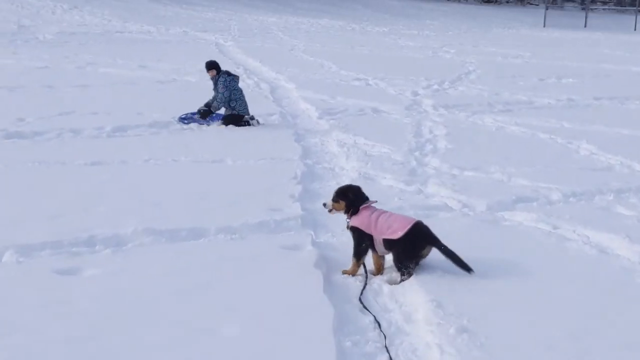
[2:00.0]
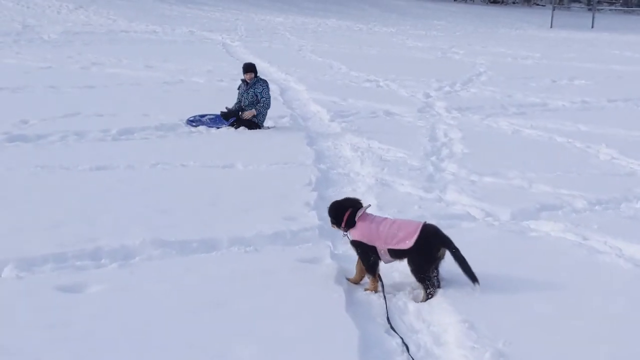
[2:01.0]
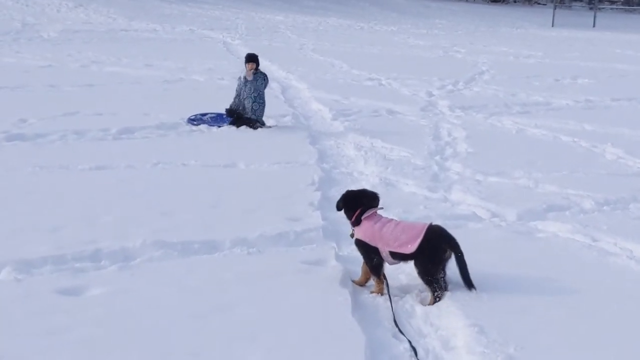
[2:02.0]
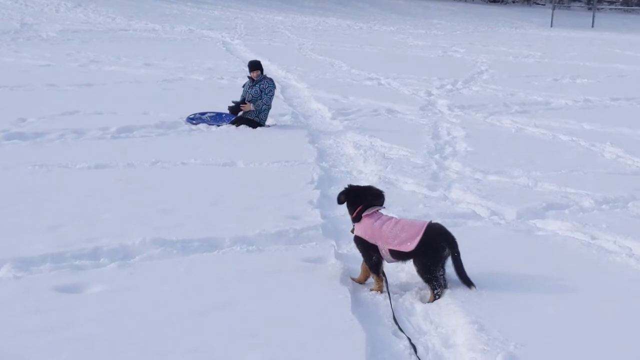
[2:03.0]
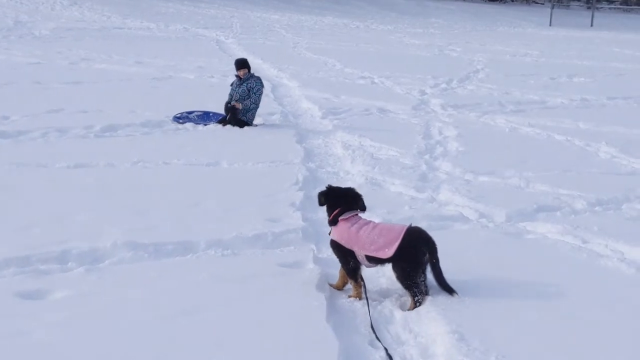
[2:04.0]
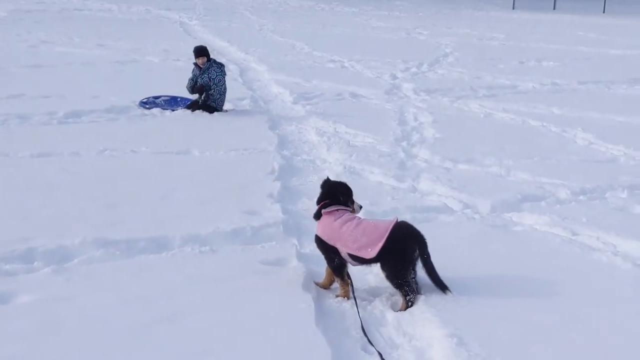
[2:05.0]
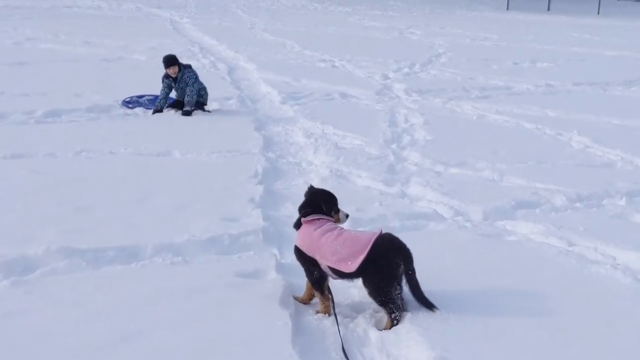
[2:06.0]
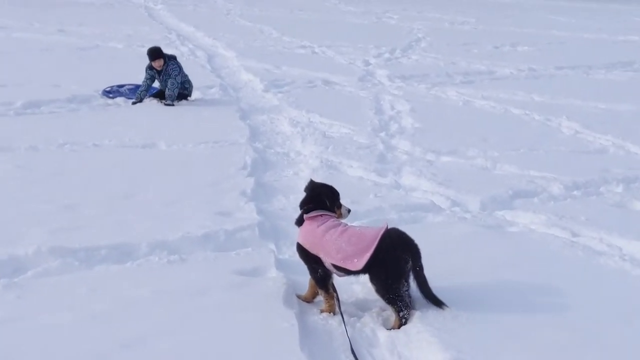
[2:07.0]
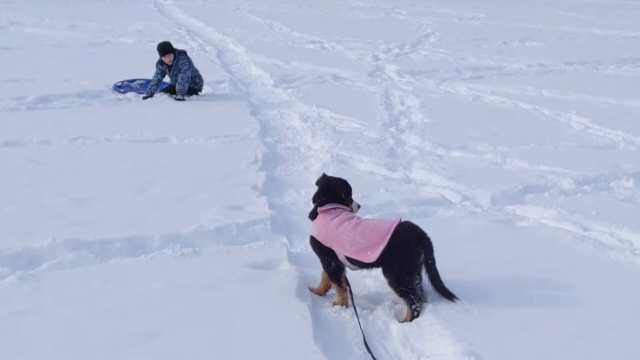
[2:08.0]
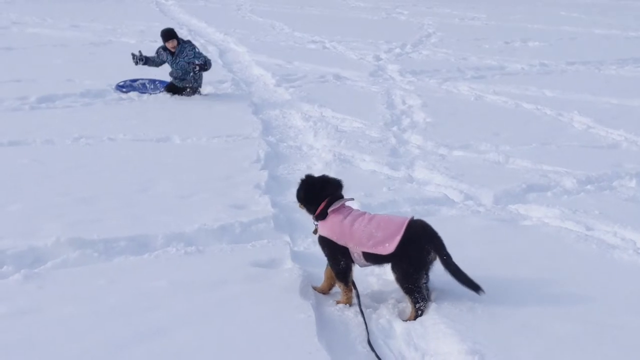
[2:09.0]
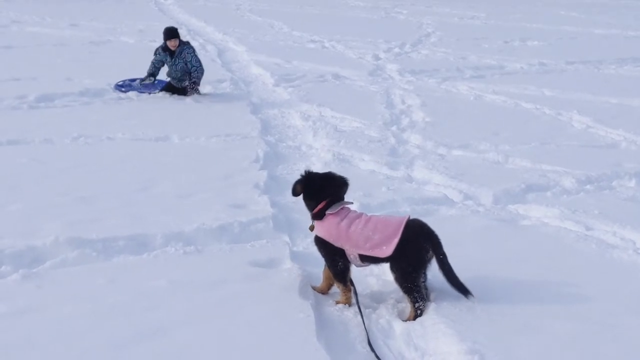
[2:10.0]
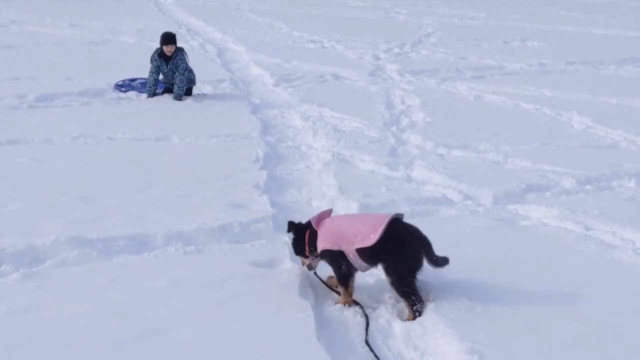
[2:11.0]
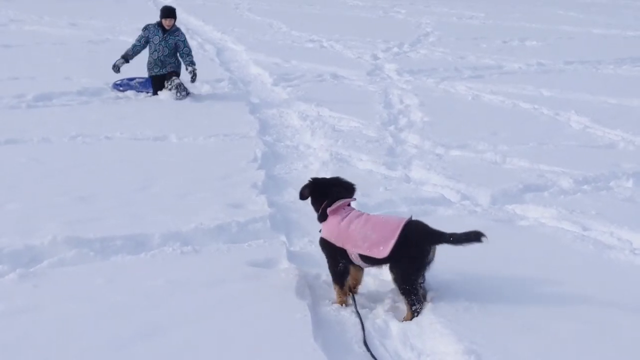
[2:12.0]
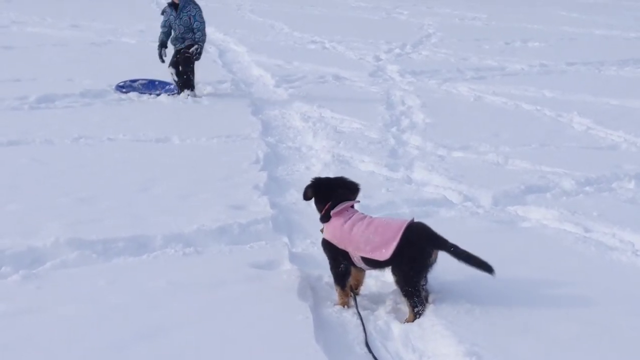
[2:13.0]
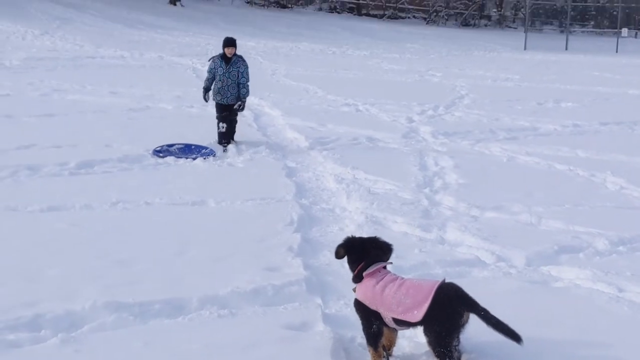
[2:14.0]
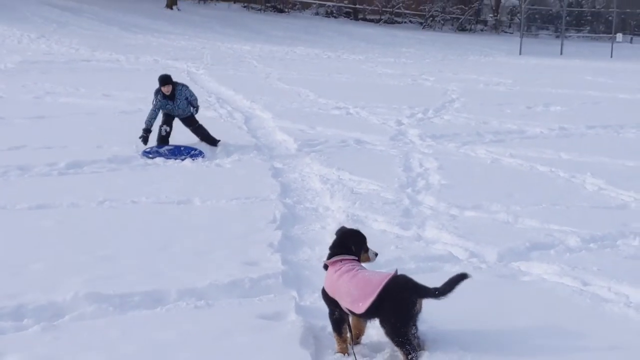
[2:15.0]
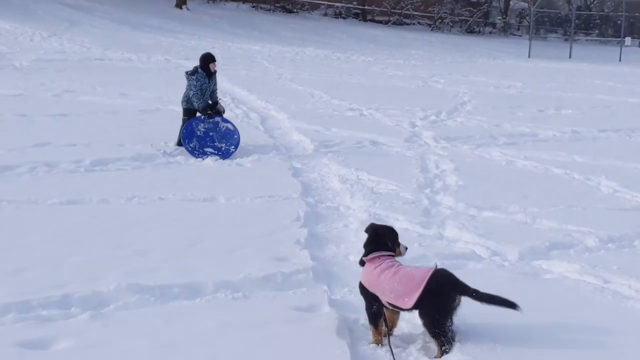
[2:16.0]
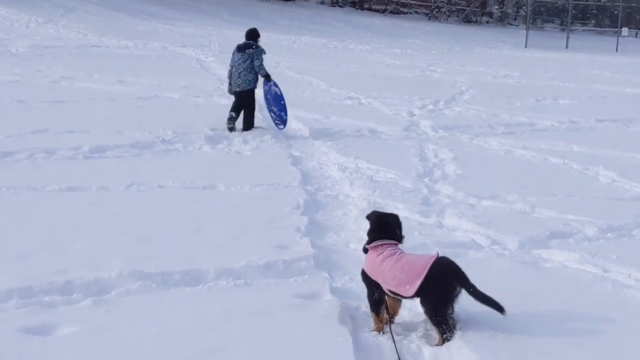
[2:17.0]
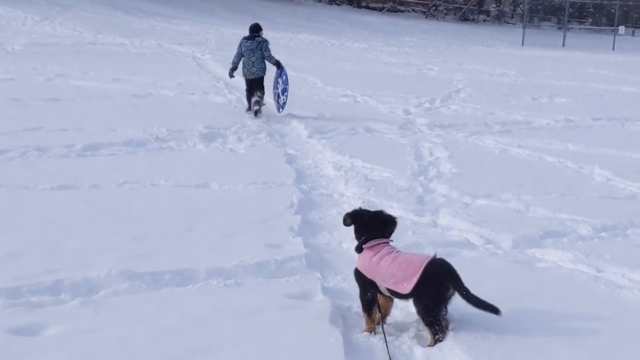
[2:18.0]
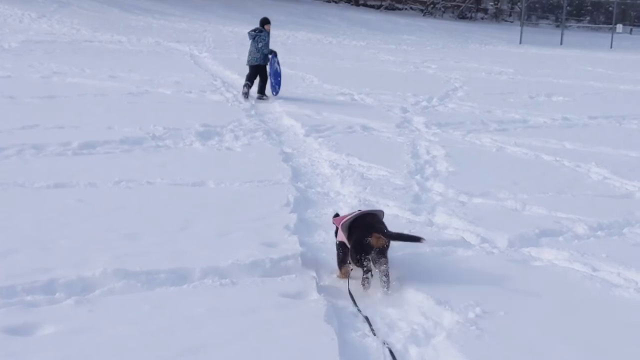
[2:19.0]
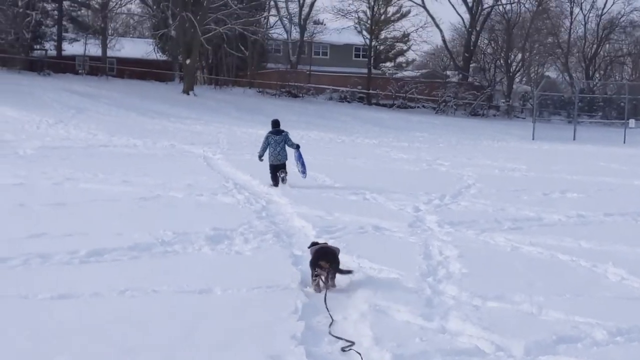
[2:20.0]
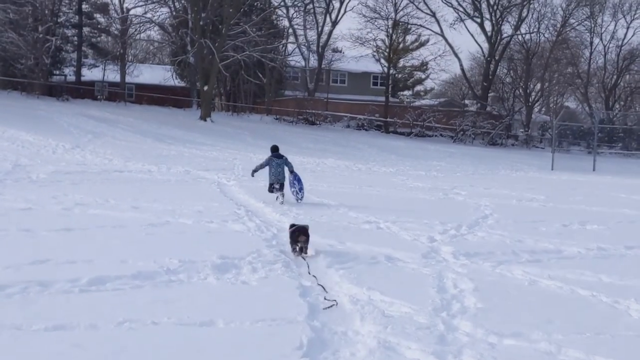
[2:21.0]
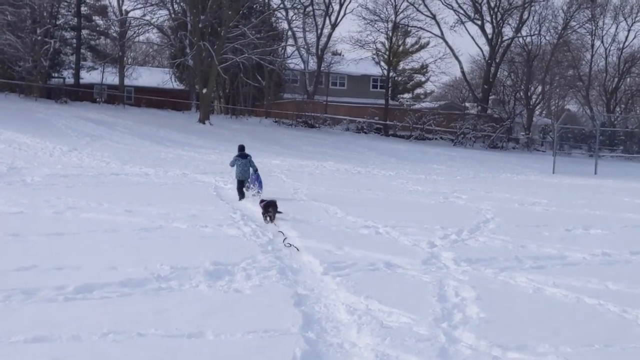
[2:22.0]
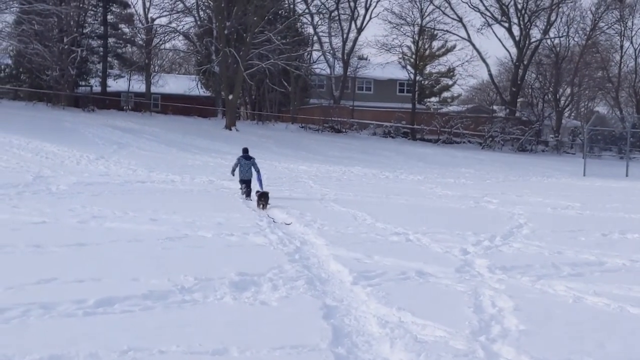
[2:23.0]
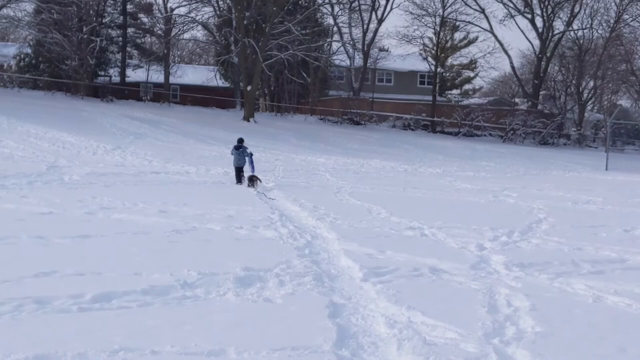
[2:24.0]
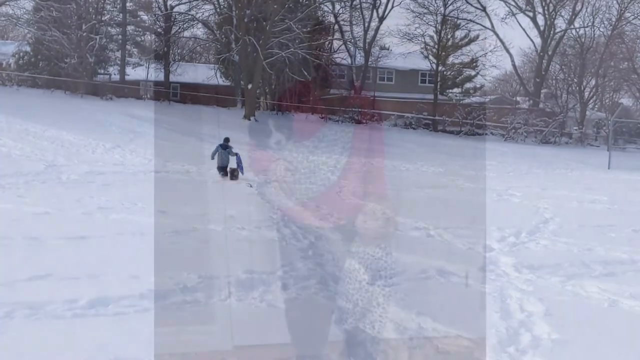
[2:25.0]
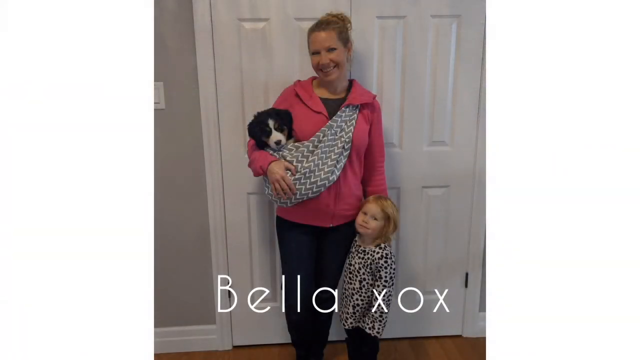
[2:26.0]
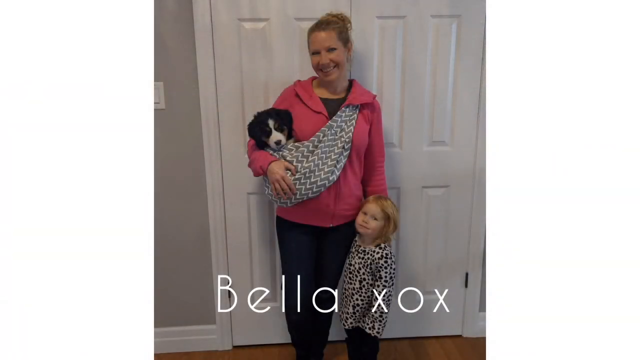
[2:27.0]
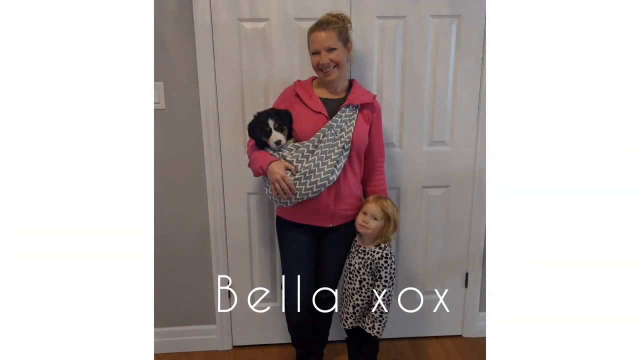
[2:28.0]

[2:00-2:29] Outside, there is lots of snow on the ground. Someone, apparently a child, is playing in the snow, and a puppy on a leash wears a pink warmer around it. The child gestures towards the dog. The dog looks at the person and seems to be reacting to them. He is being playful; he has a blue sled and runs away with it, and the dog runs after the boy with the sled. The video then cuts to a photograph of a lady with a sling around her waist holding the puppy. Her daughter, a little girl about waist height to the lady, is stood next to her. Below the photograph a caption says "Bella", with "XOX" next to the name.